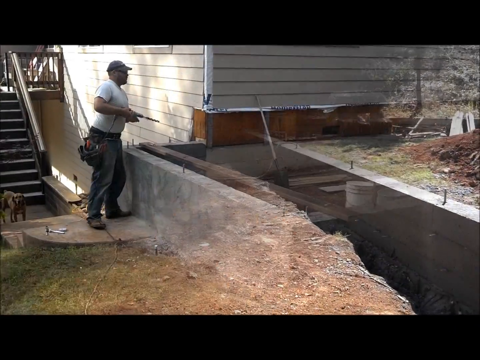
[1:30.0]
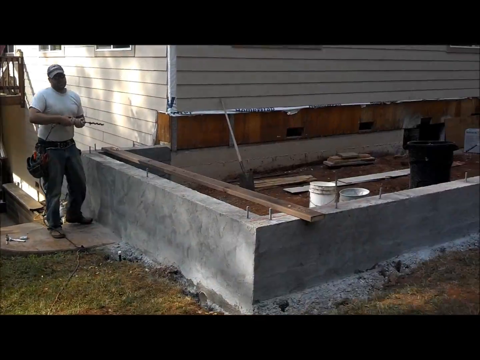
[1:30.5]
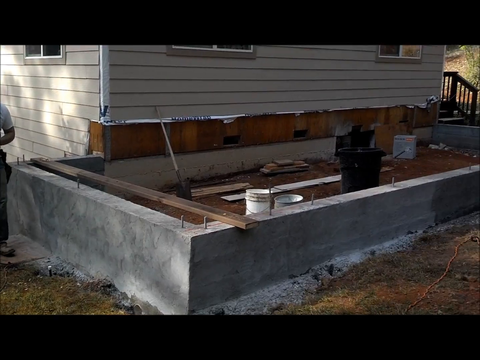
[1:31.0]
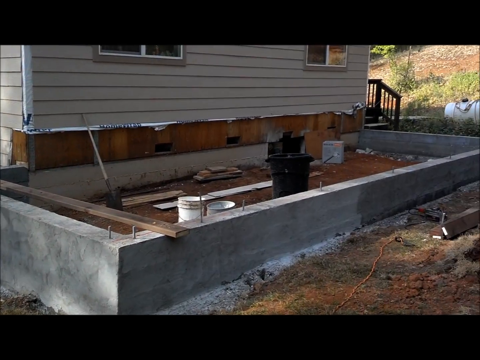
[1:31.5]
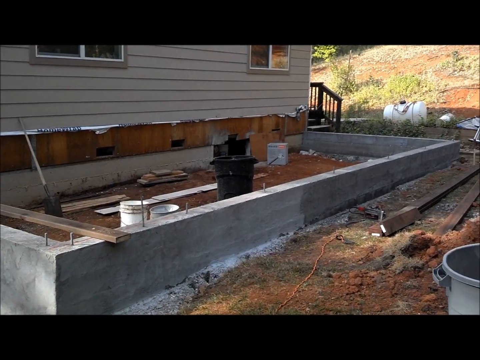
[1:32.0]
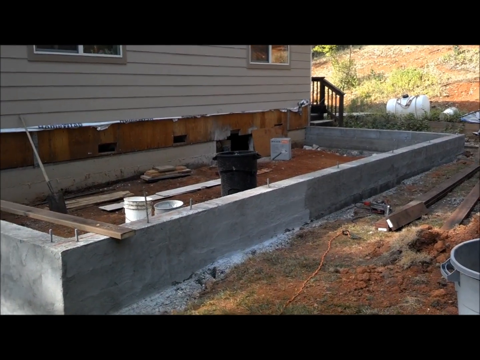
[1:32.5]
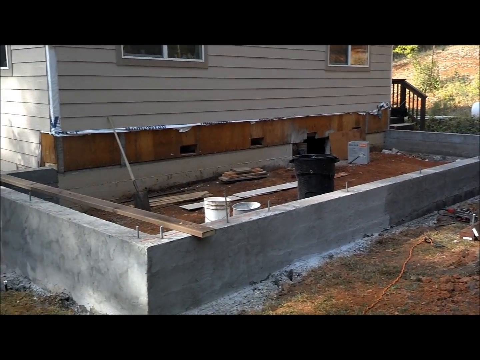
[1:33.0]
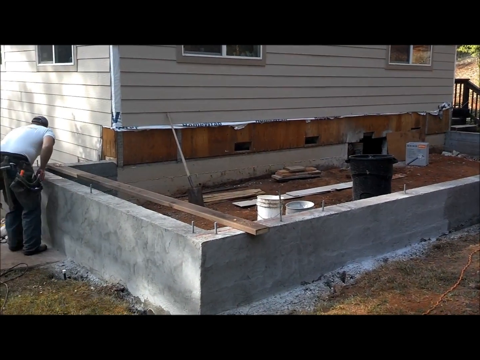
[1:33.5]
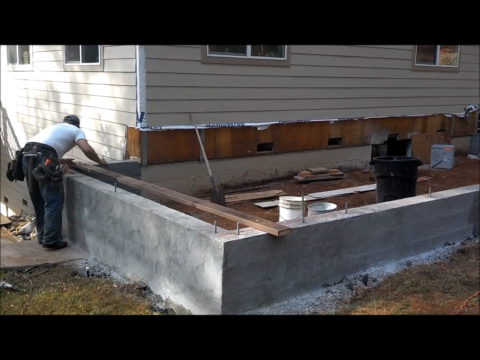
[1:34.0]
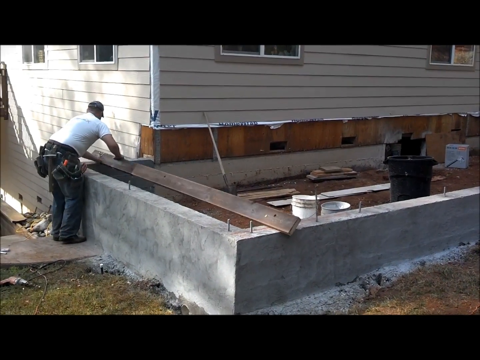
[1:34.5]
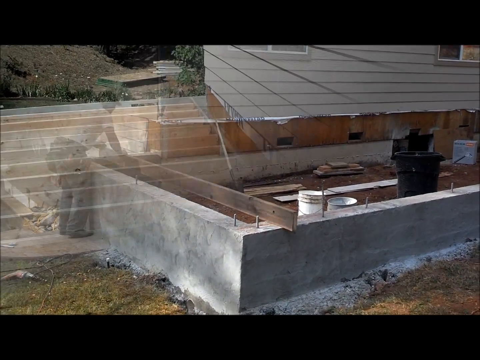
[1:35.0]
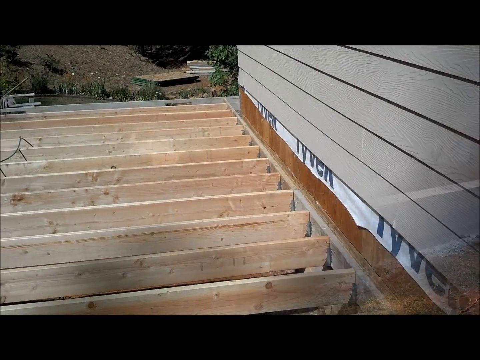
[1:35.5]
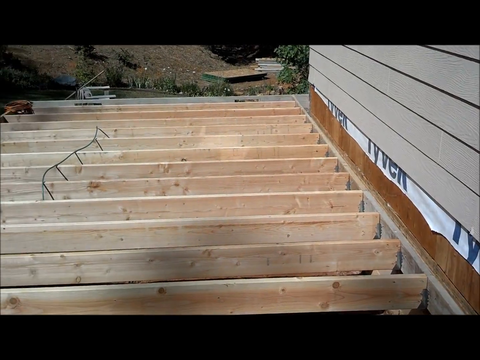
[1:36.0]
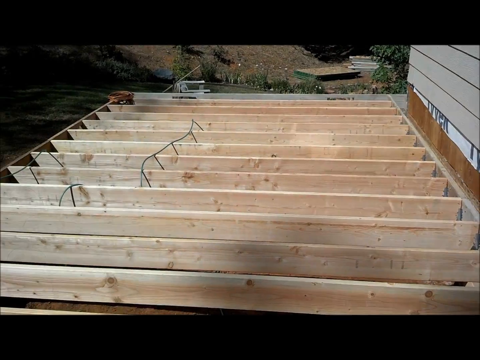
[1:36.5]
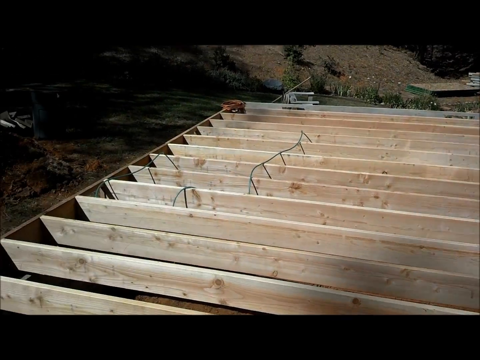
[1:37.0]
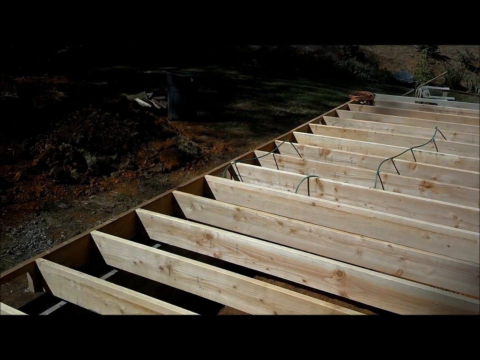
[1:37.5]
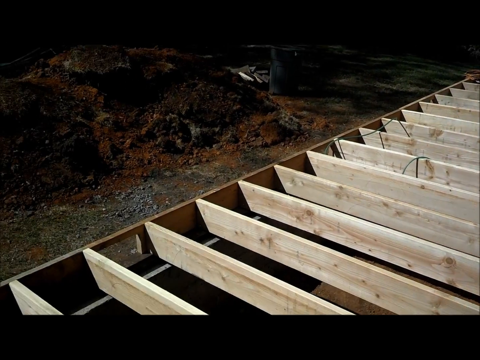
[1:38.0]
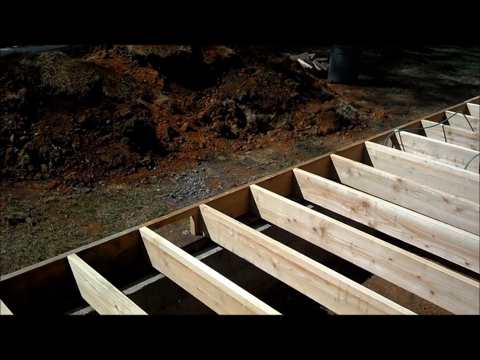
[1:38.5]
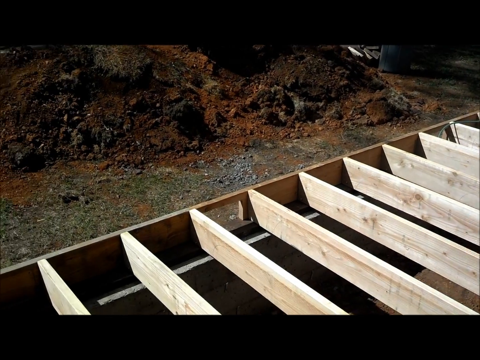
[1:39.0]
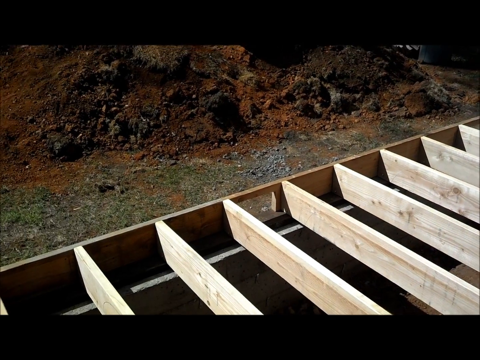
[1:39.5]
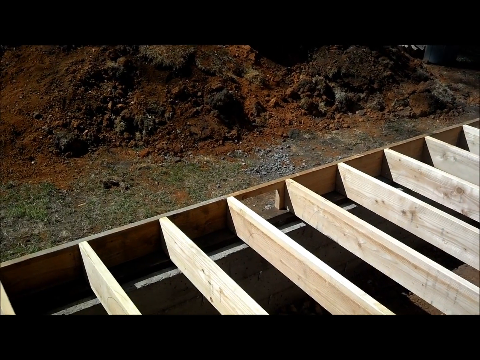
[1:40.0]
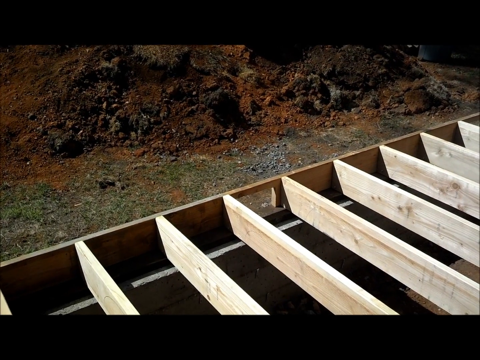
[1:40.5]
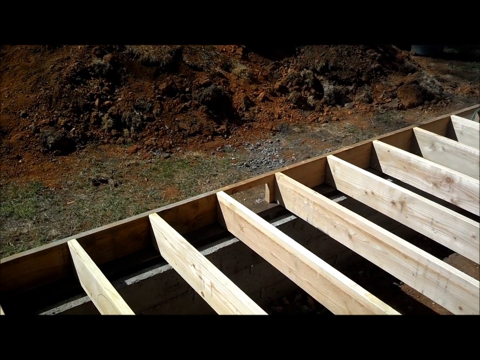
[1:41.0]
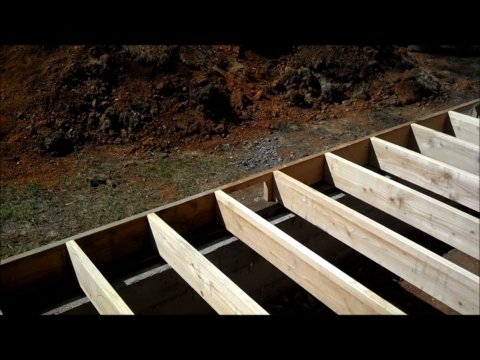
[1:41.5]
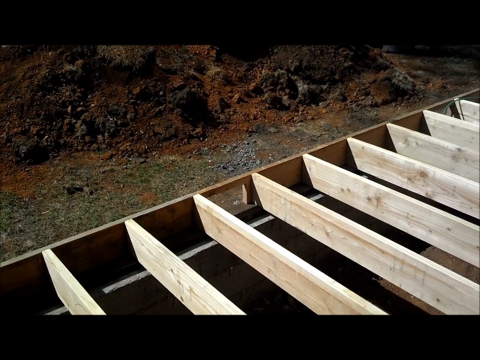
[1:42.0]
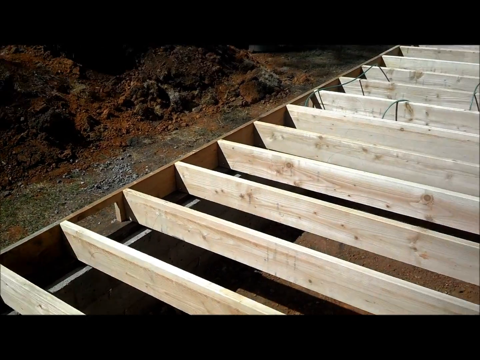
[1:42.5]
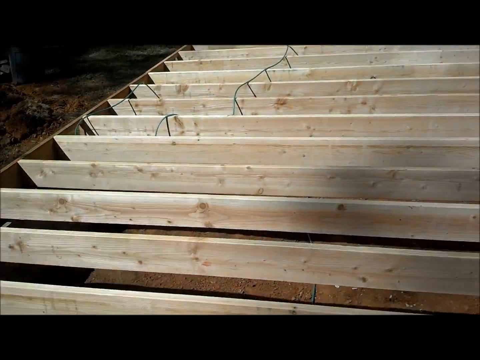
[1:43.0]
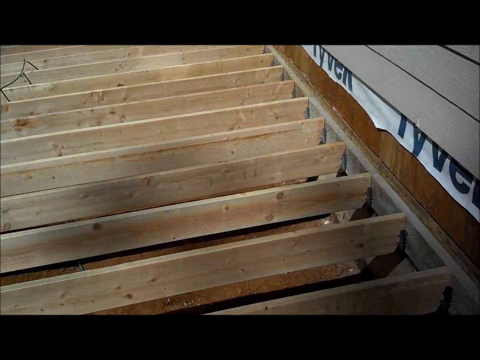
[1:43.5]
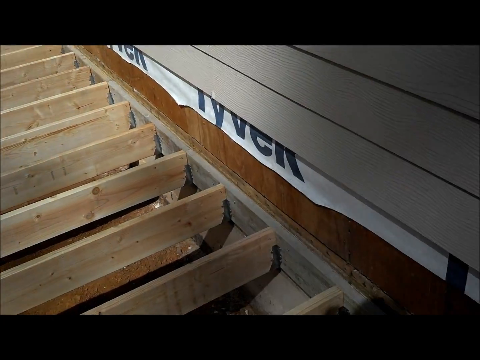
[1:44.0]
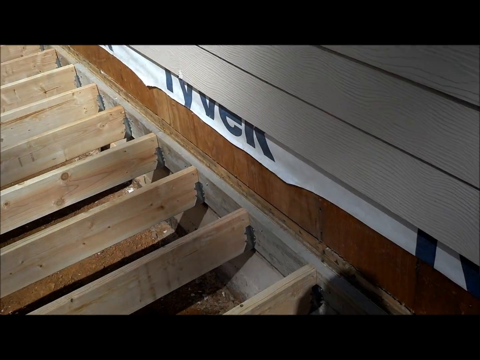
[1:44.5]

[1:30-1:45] The same white man in the white shirt and blue jeans lays down lumber that looks like 2x6s rather than 2x4s, running from where the cement was poured to the side of the house. The progress is then shown after he is done: the boards look evenly spaced, with maybe about 30 to 40 of them, apparently two by sixes.